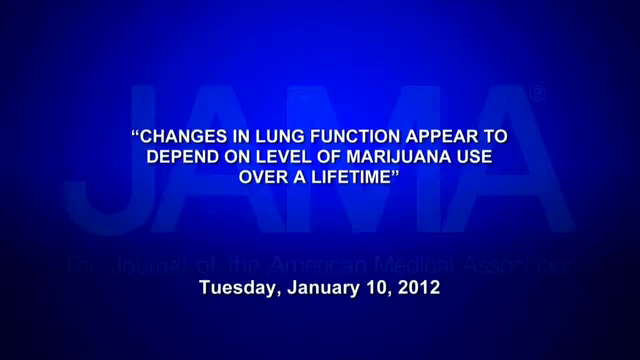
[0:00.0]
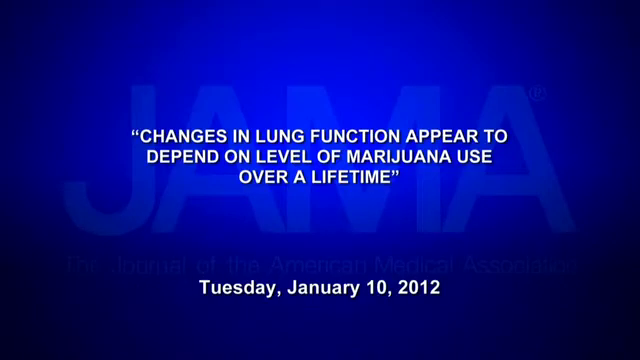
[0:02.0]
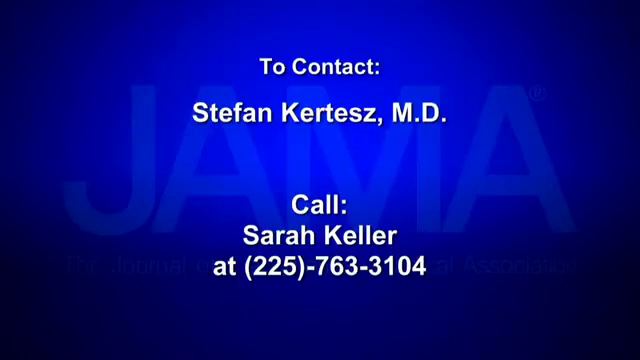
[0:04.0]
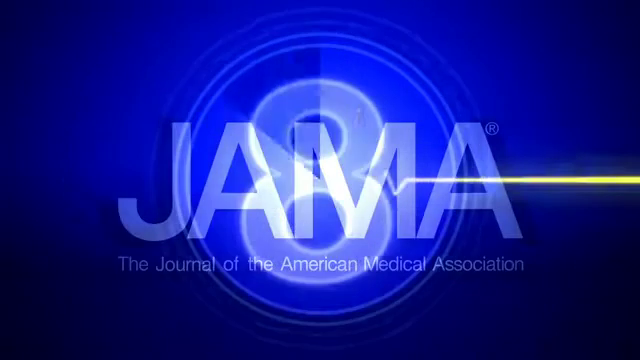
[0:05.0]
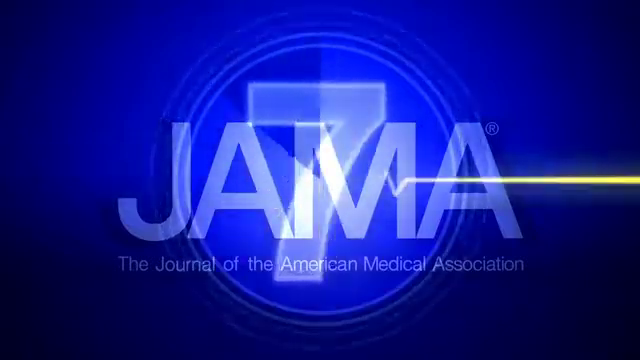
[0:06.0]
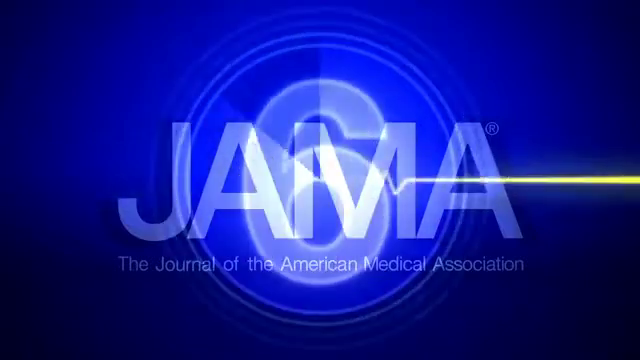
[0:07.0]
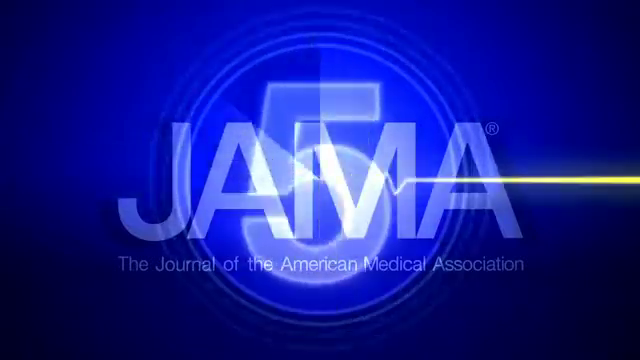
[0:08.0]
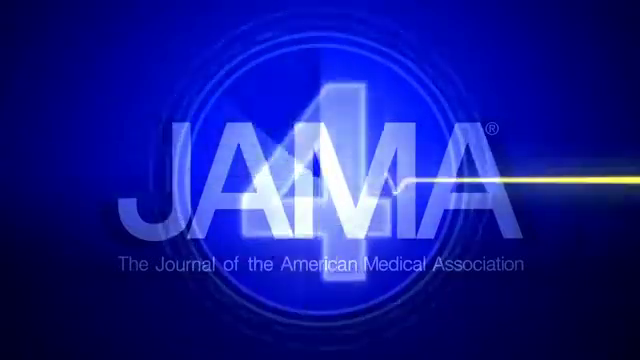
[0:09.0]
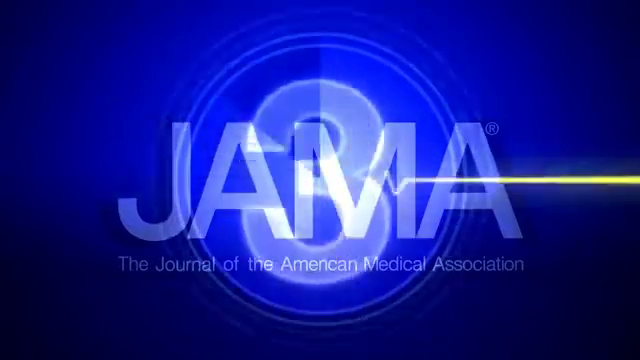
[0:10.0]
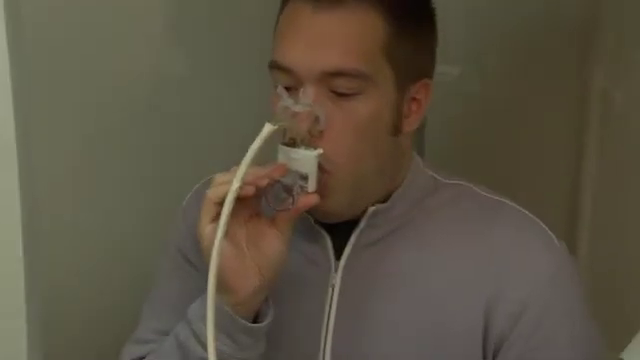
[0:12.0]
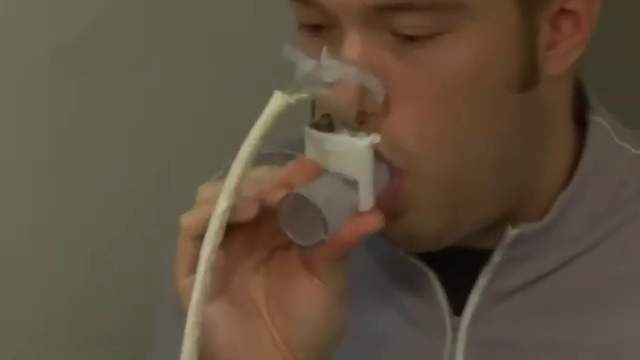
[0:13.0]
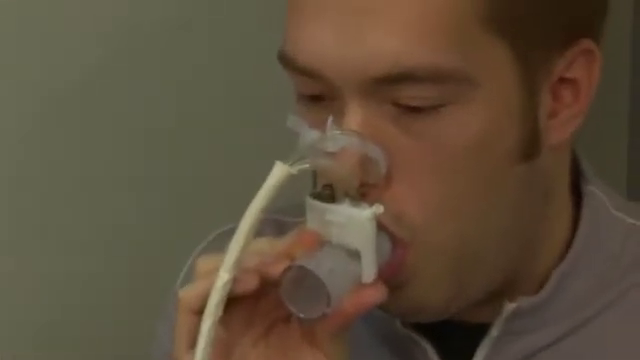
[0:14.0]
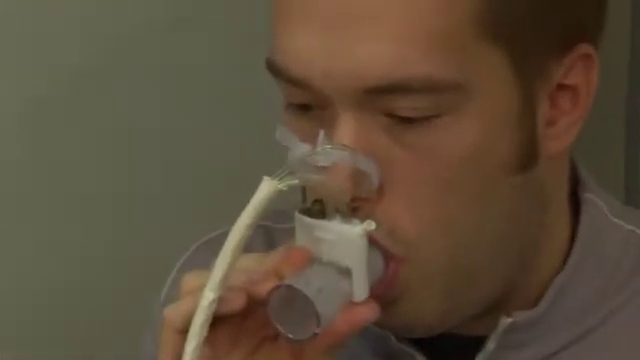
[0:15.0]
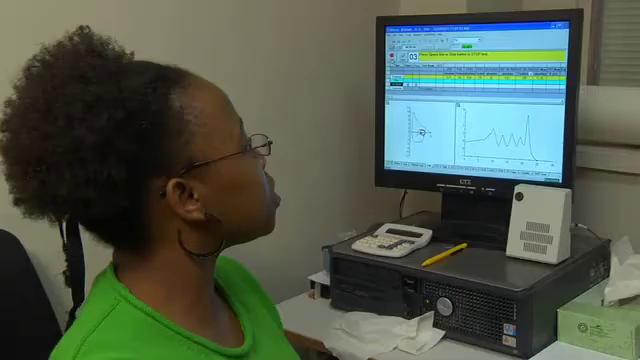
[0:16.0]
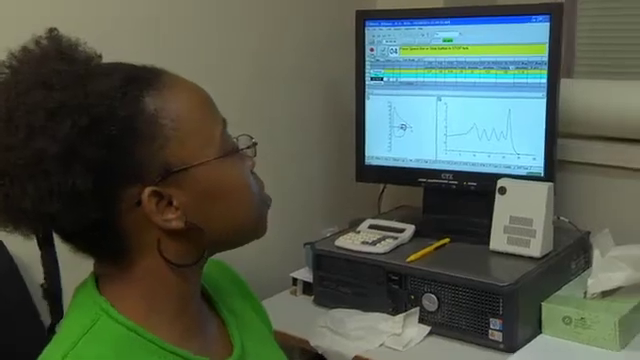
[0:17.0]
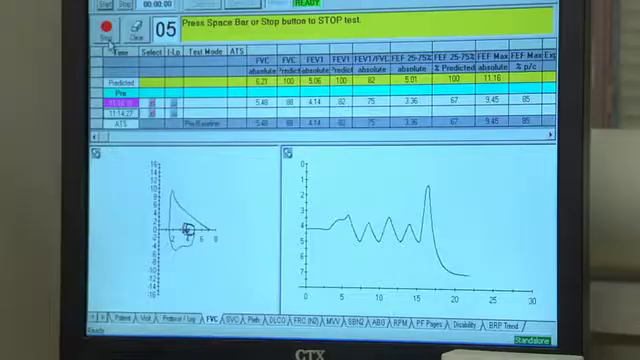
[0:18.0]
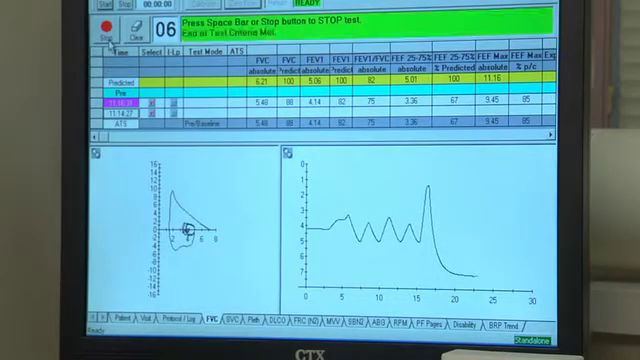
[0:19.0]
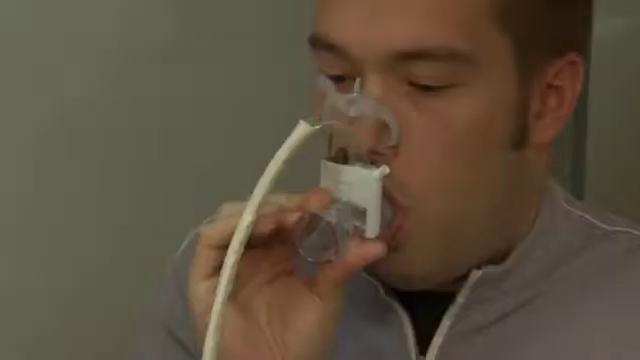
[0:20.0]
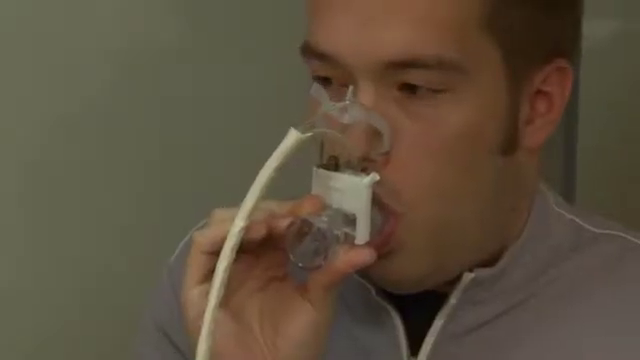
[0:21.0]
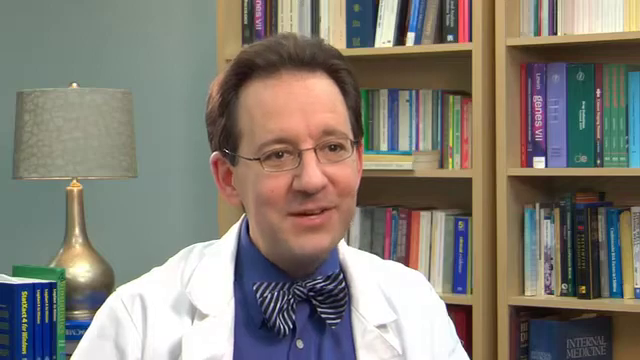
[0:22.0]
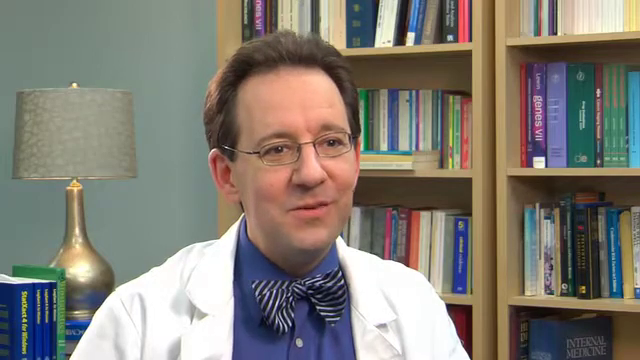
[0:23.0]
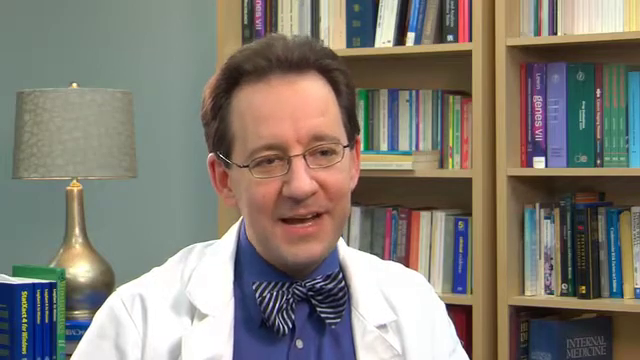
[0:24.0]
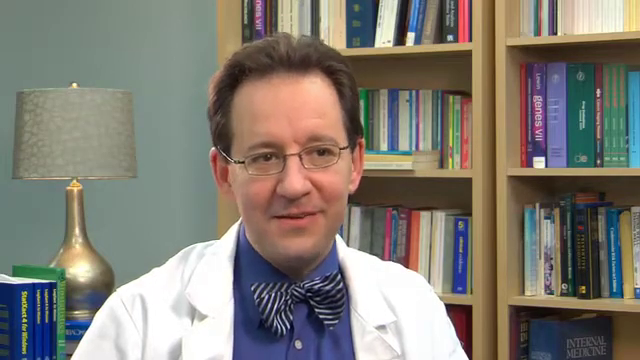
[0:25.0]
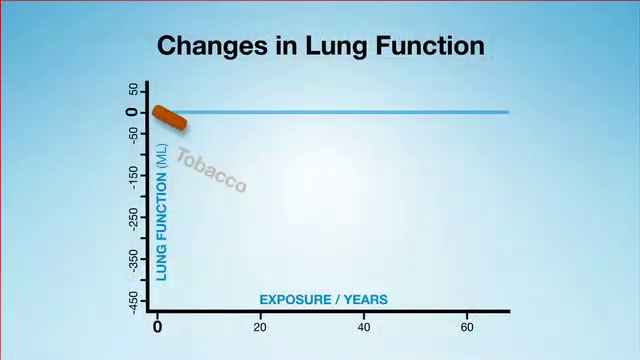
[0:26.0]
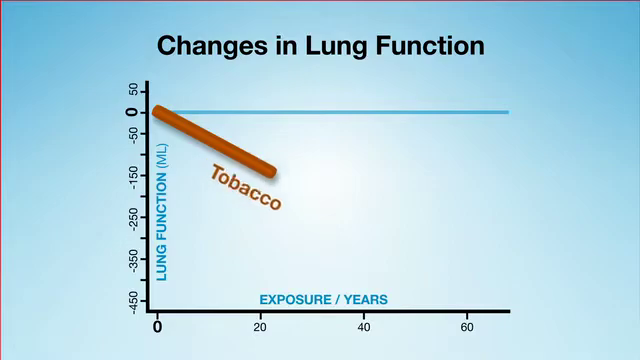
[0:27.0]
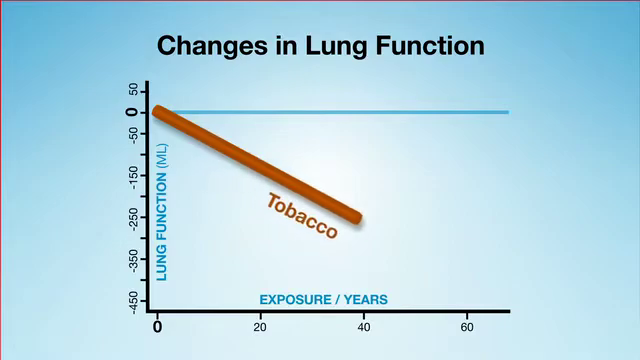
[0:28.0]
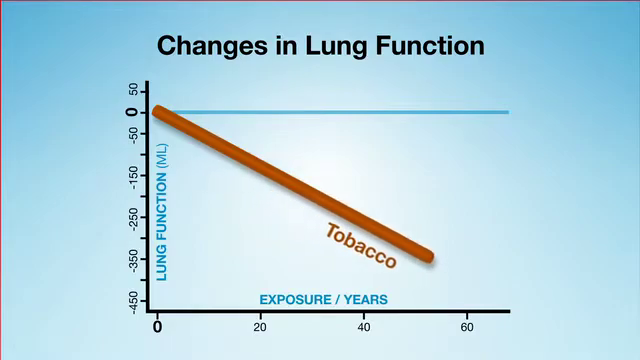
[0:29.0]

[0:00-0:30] A royal blue background fills the screen, with the word "JAMA" layered over it in a light blue that appears to be transparent. Additional words are layered on top in white in the middle of the screen: "changes in lung function appear to depend on level of marijuana use over a lifetime." In the lower quarter of the screen are the words "Tuesday, January 10, 2012." The word "JAMA" then lights up in a more vibrant light blue, and what looks like a lightning bolt flashes across the screen. Layered over this is a circle with the number 7 inside it, also in light blue like the lightning flash. A zigzag line comes into the screen from the left side, multiple times; it appears to be a pale yellow that transforms into white as it goes up and down, sort of like the line on a machine in a hospital room. Next, a man appears to be on some sort of breathing apparatus attached to his face. It covers his nose, part of it is in his mouth, and it is attached to a white tube.